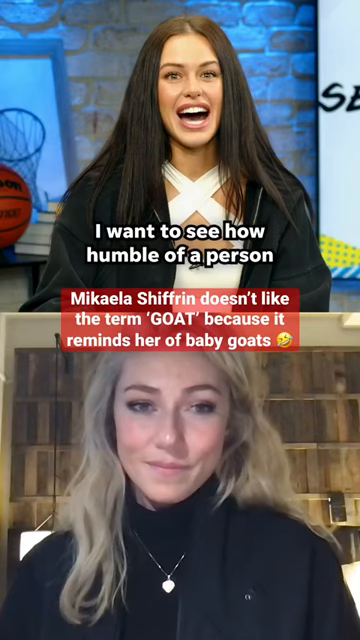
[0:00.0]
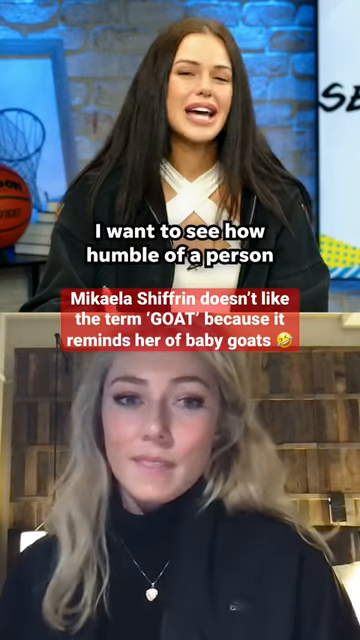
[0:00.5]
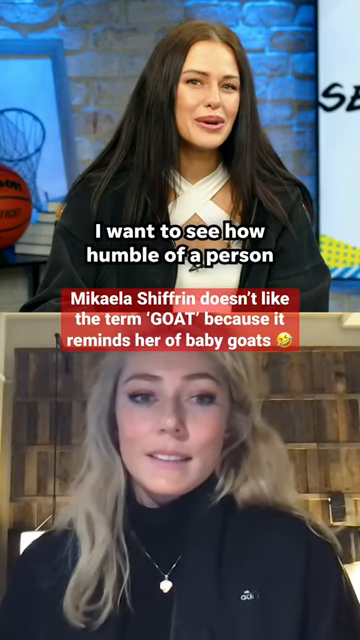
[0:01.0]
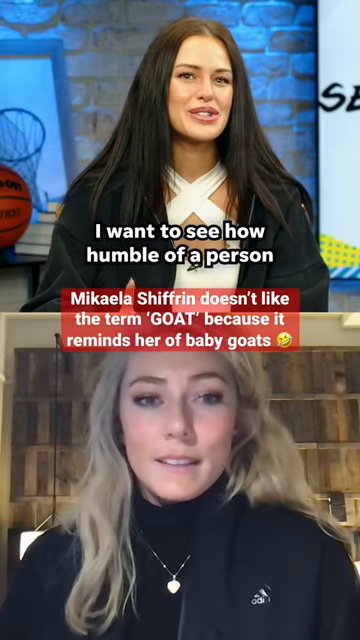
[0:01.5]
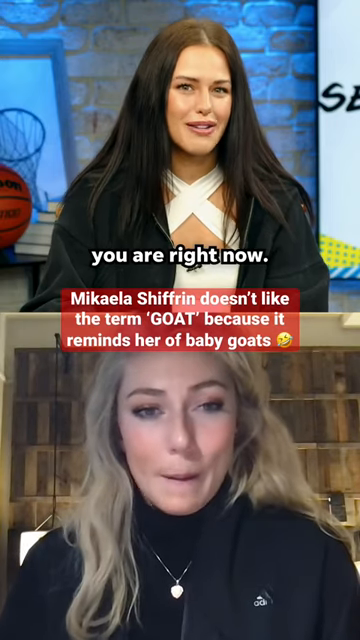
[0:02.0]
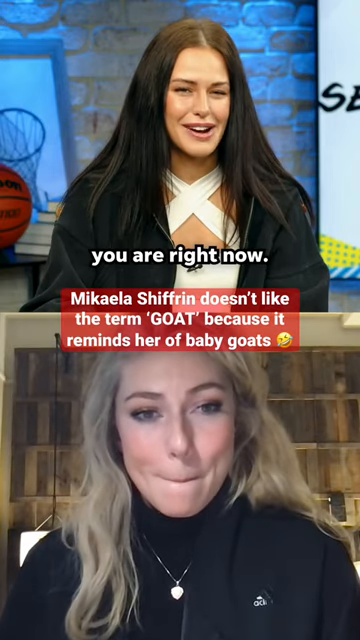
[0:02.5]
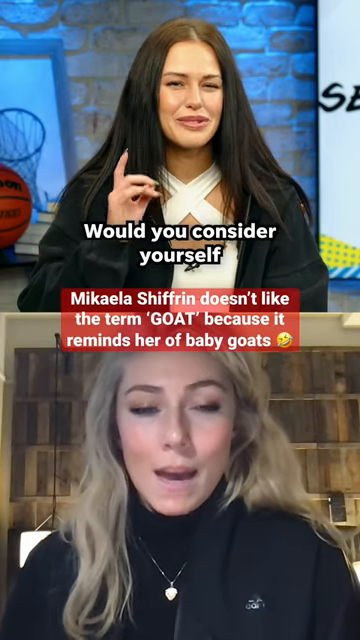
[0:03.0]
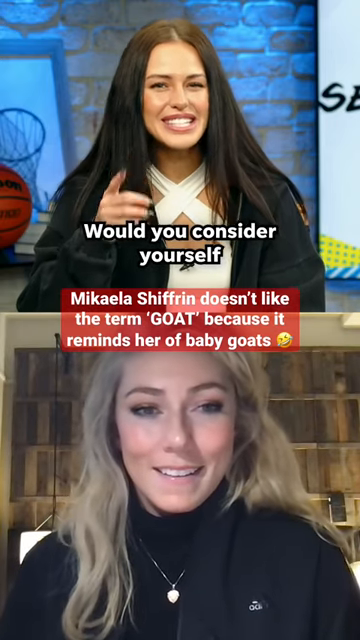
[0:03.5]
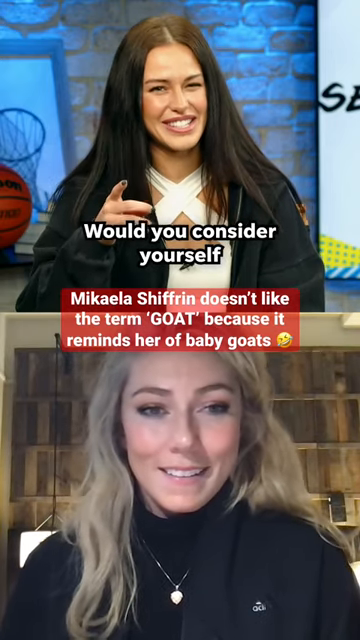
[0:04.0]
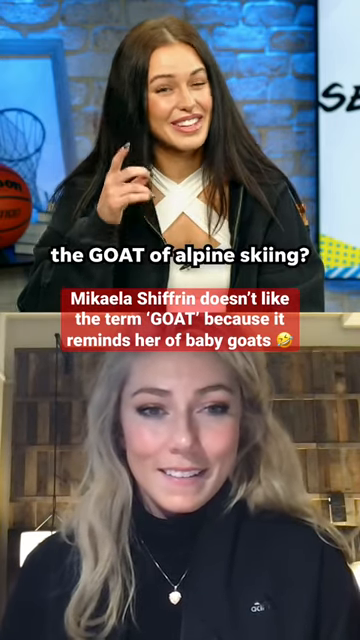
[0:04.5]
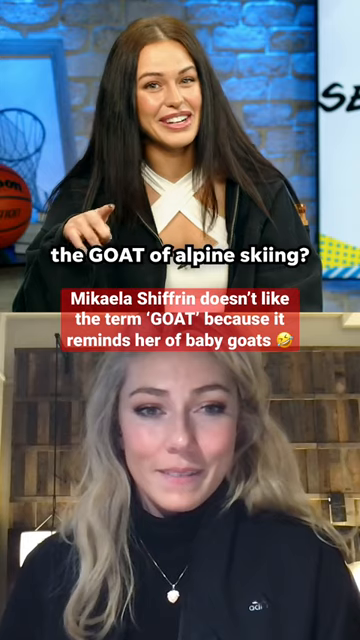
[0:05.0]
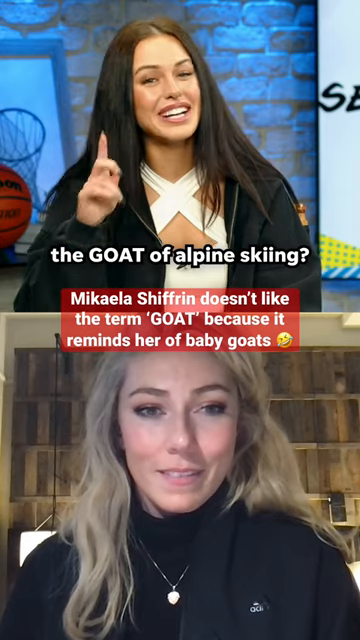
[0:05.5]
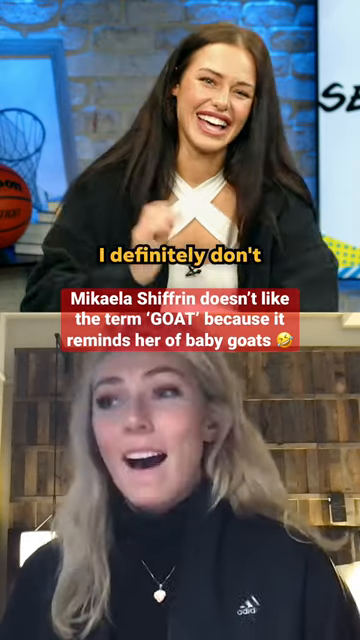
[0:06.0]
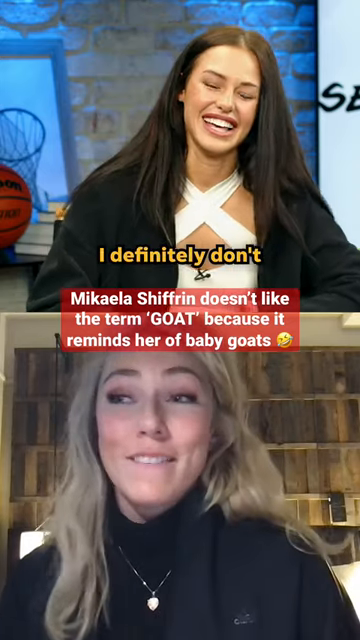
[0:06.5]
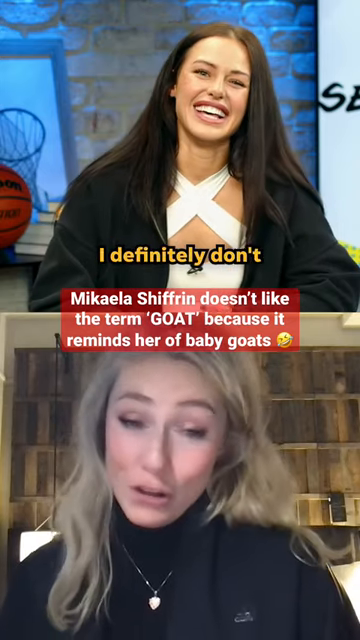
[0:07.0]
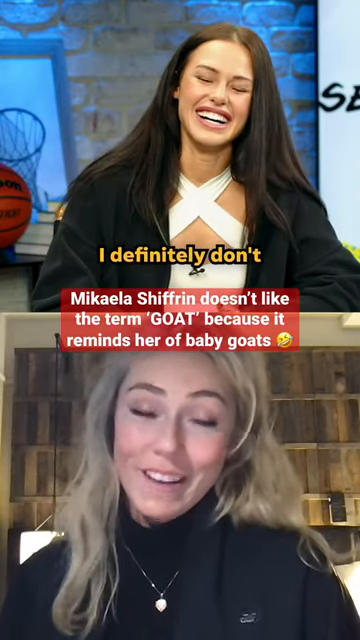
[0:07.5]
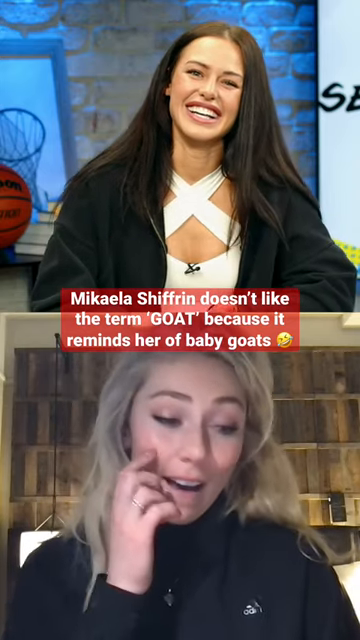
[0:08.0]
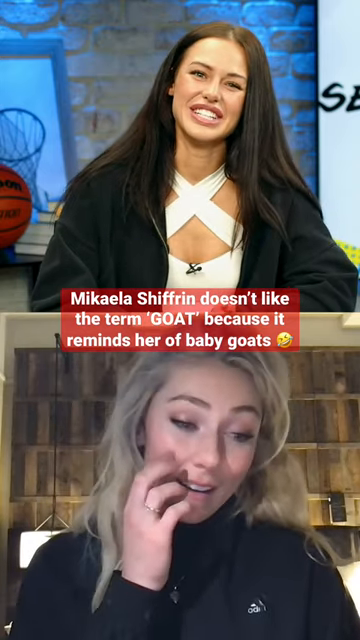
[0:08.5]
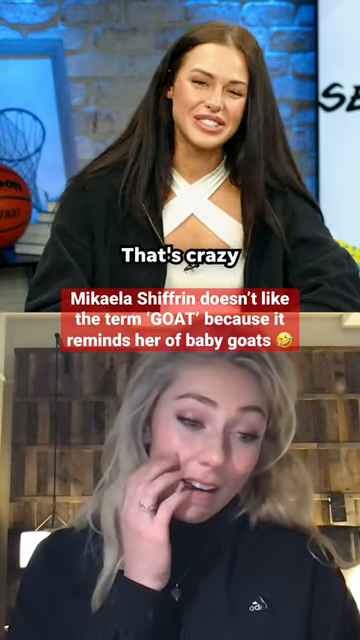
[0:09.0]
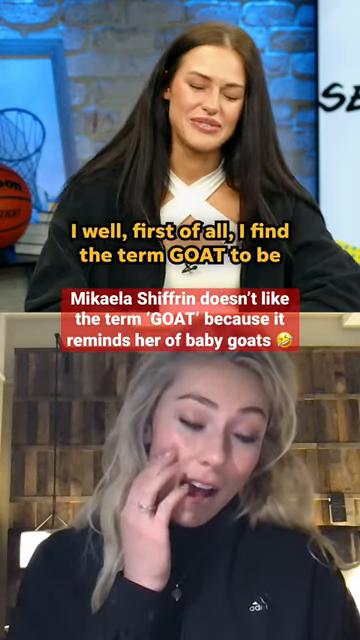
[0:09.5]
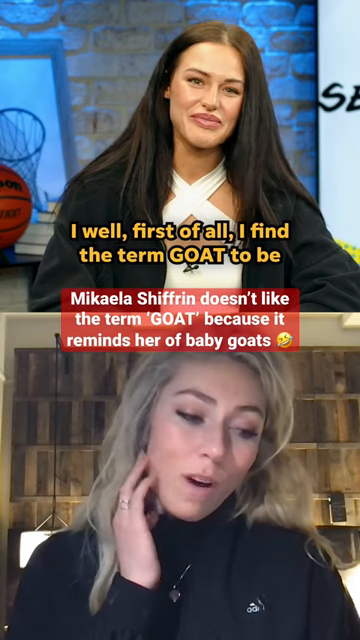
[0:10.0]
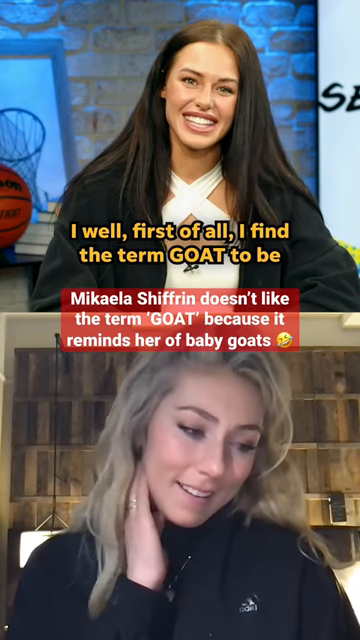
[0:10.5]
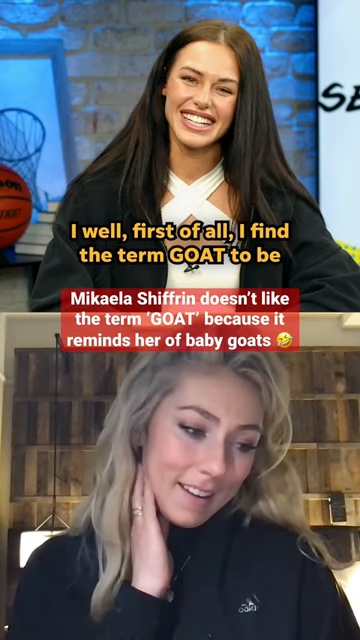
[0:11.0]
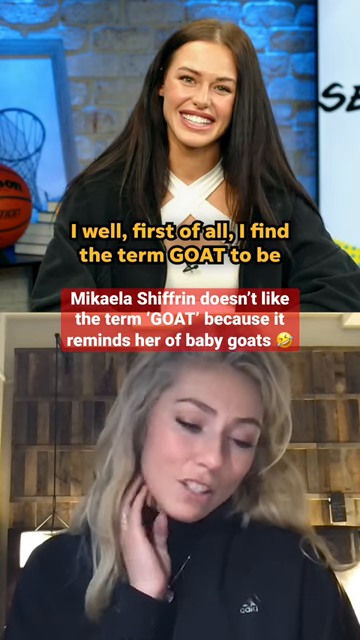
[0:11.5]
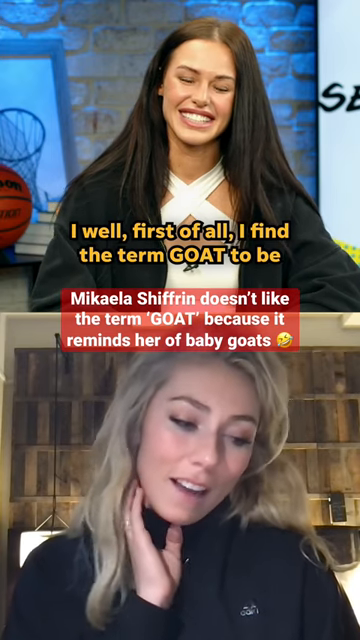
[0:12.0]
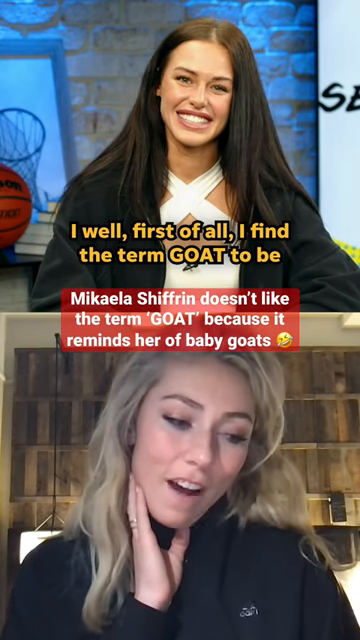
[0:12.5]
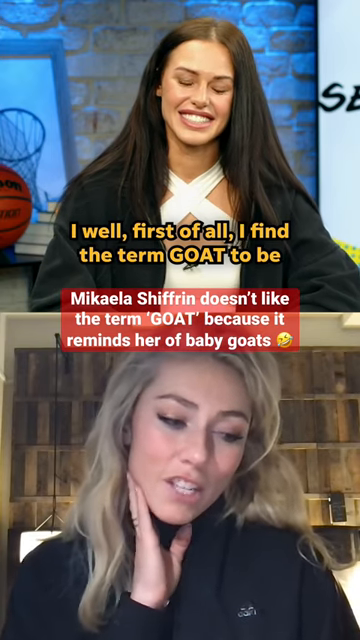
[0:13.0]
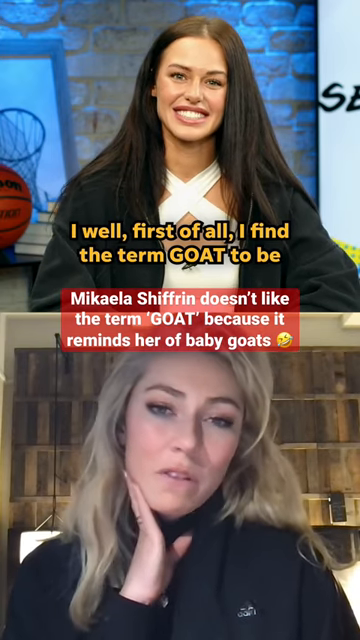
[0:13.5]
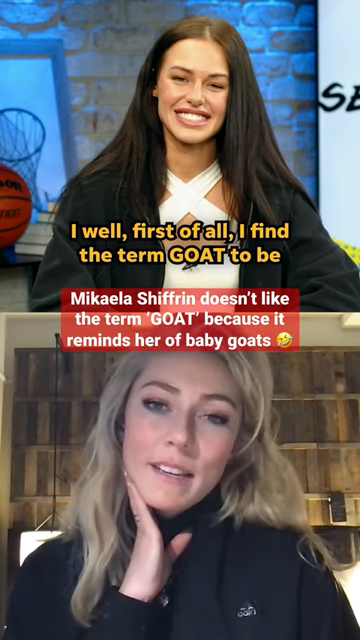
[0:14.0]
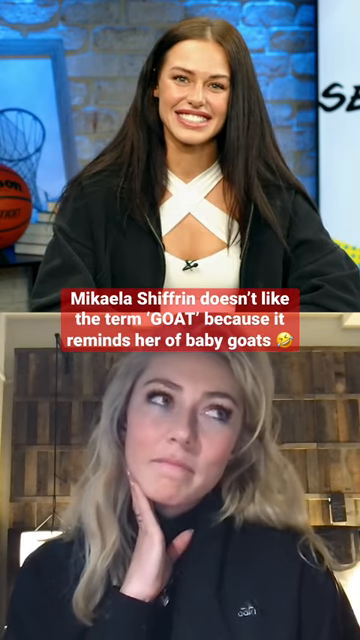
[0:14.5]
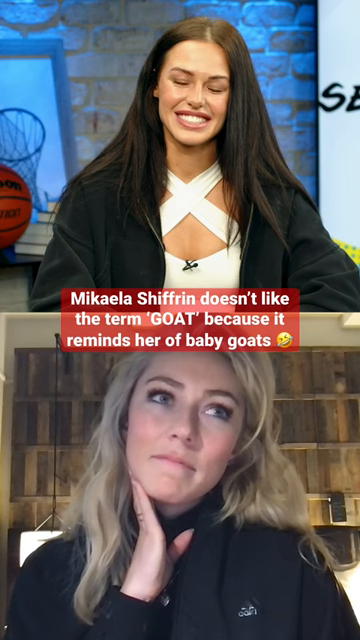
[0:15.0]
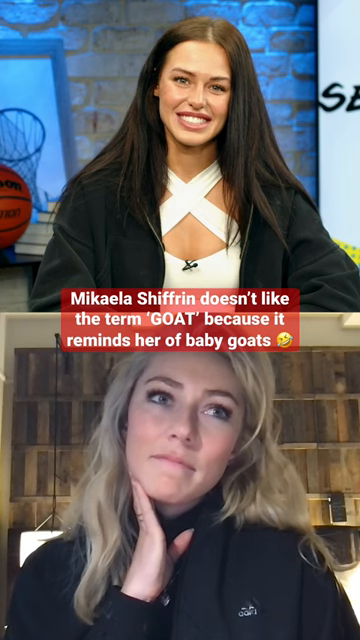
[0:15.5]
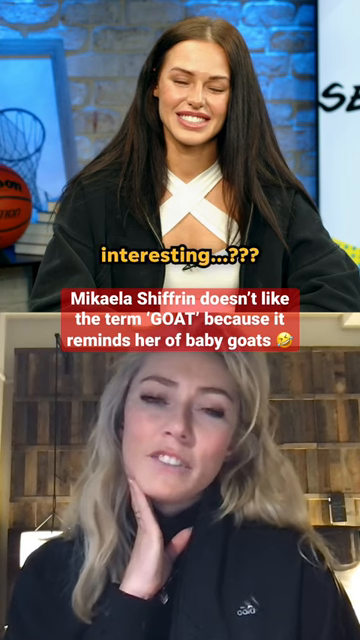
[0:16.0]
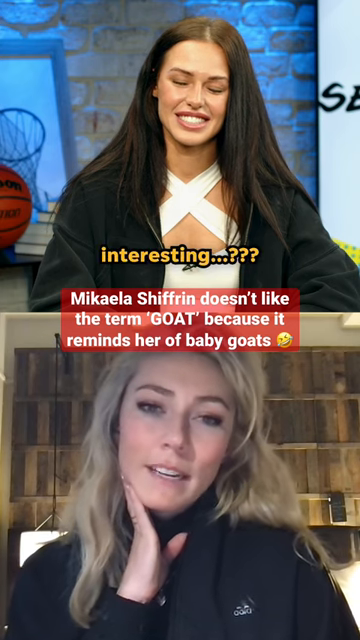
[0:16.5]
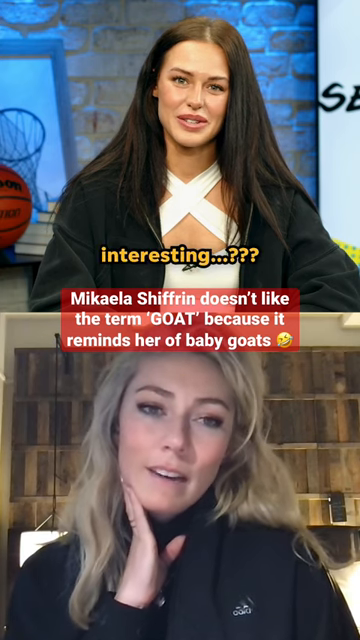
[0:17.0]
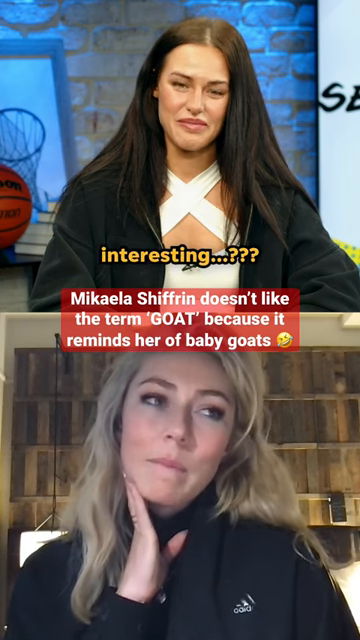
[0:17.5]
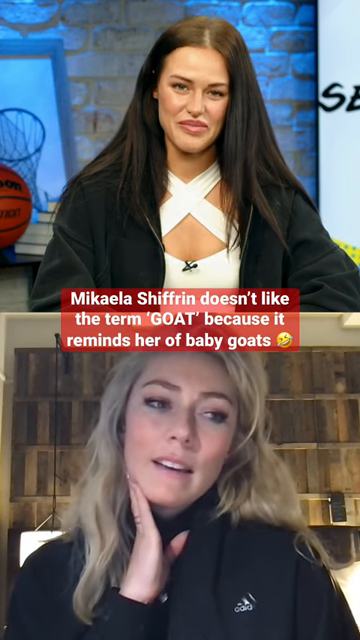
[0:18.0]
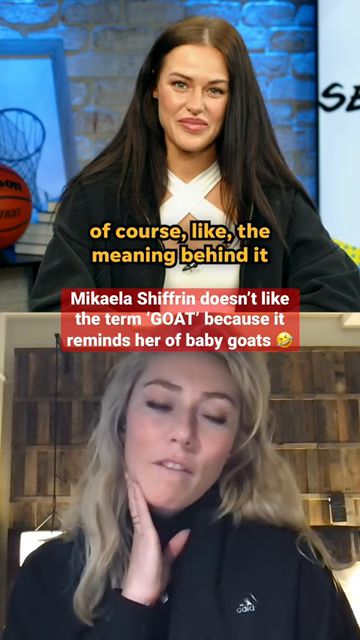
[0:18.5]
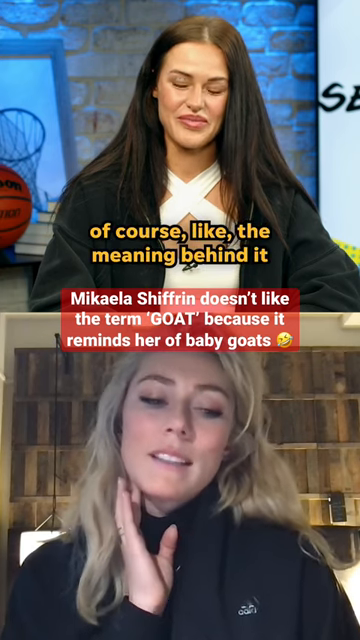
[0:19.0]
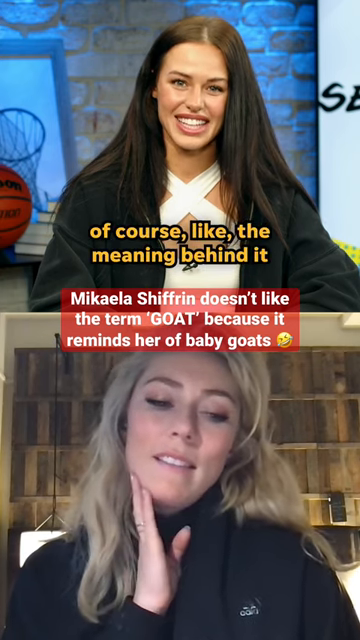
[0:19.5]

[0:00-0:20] Two young girls appear on screen, one with brown hair and the other with blonde hair, under what looks like orange lighting. The brown-haired girl has straight hair and is kind of smiling; she wears a black top, all black, with a necklace. Behind her is a wall painted blue. There is red writing with white text, and the screen reads "I want to see how humble of a person Mikayla Shifton doesn't like the term goat, because it reminds her of baby goats." The two seem to be just talking to each other, possibly about sports. One of them wears a white shirt with an X. Behind them are tons of basketballs, including an orange basketball.